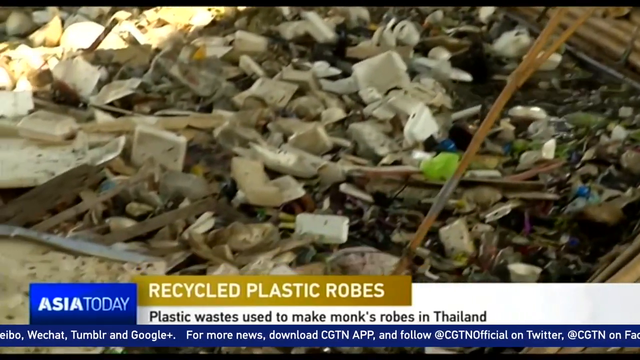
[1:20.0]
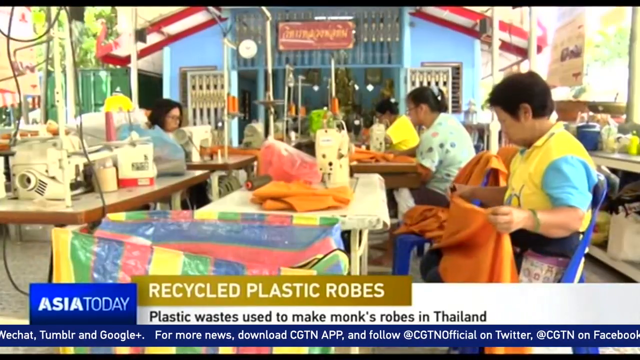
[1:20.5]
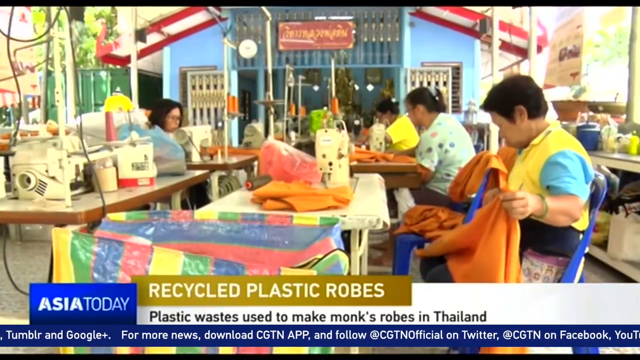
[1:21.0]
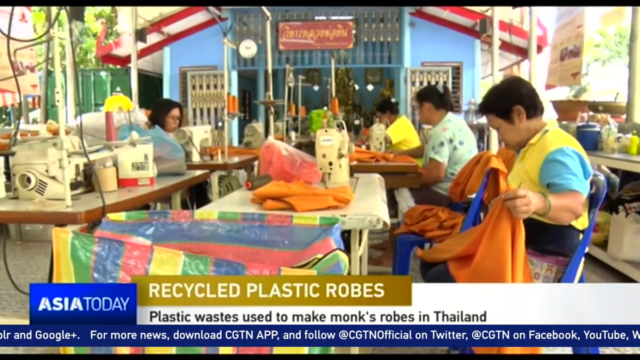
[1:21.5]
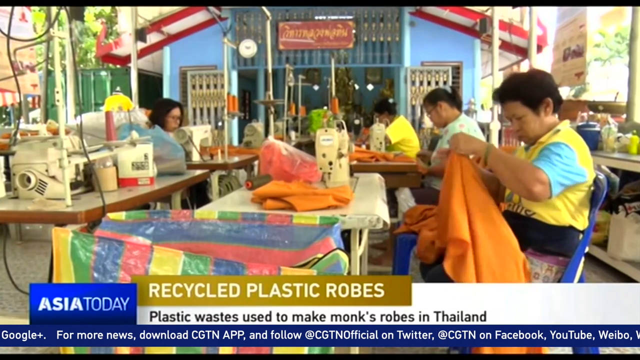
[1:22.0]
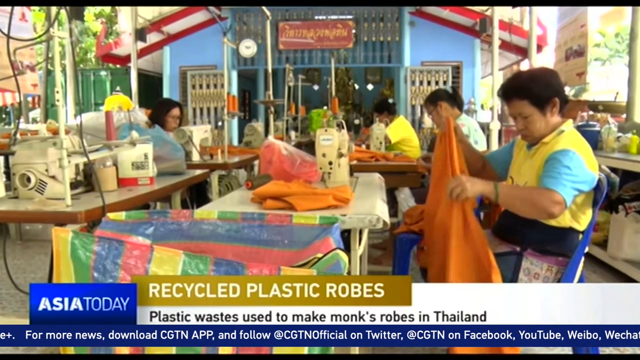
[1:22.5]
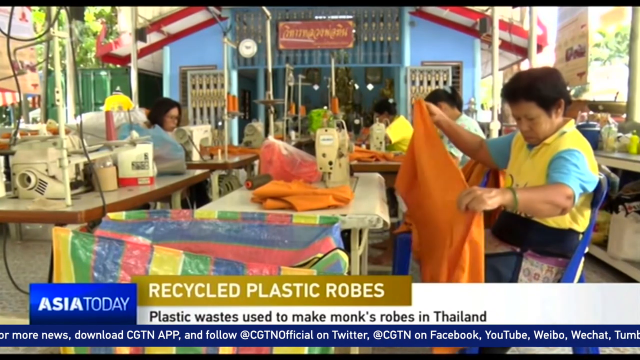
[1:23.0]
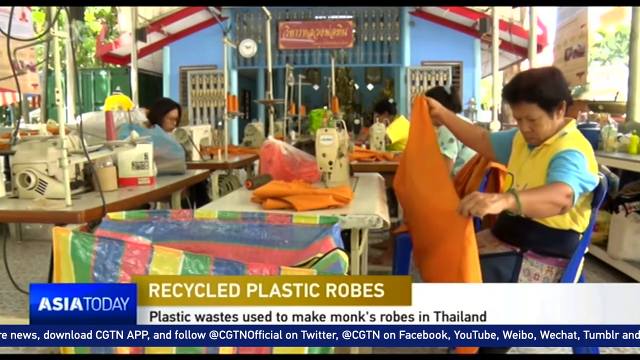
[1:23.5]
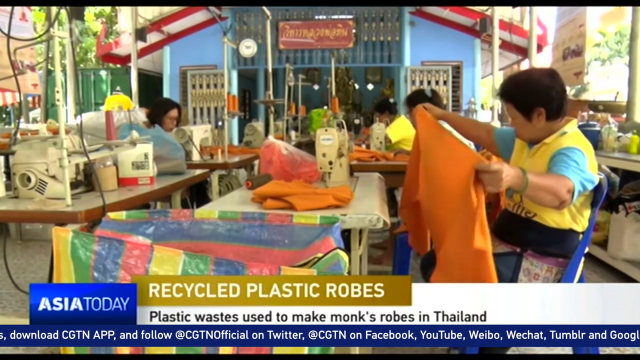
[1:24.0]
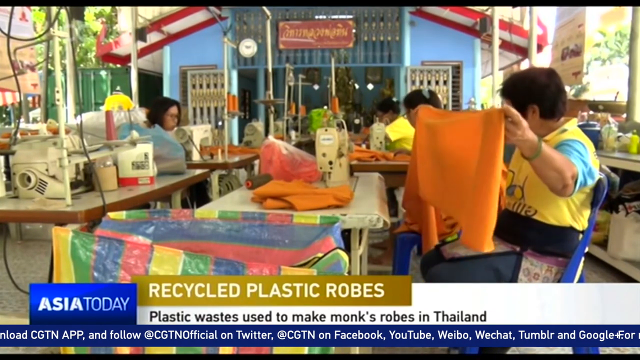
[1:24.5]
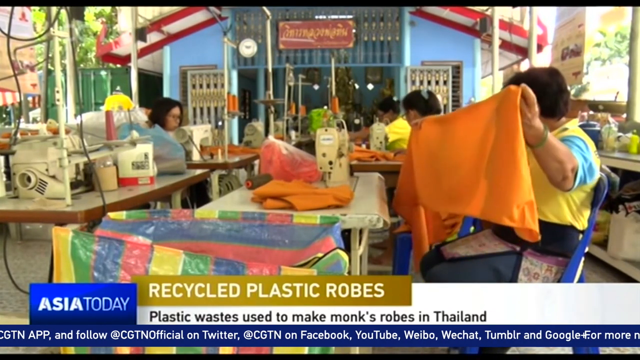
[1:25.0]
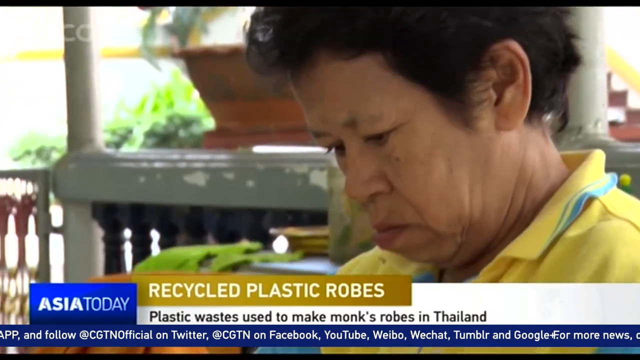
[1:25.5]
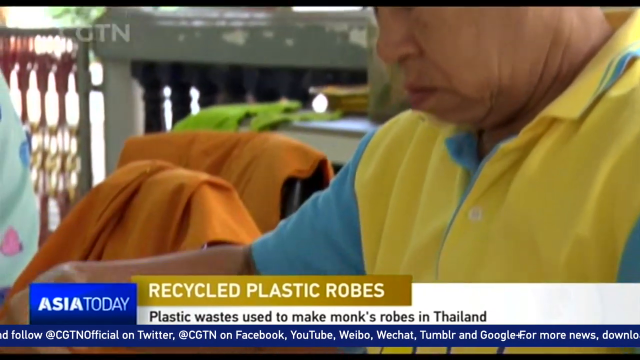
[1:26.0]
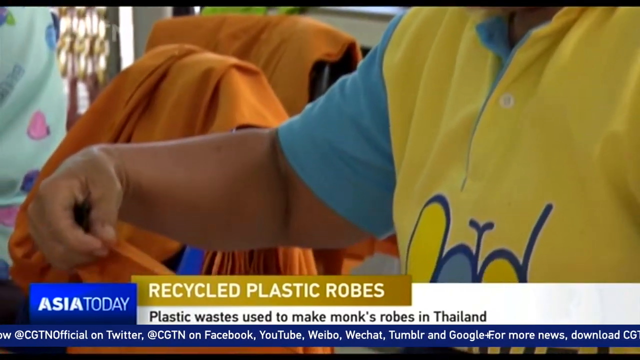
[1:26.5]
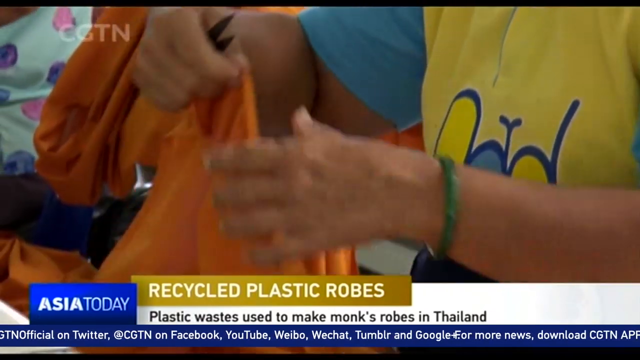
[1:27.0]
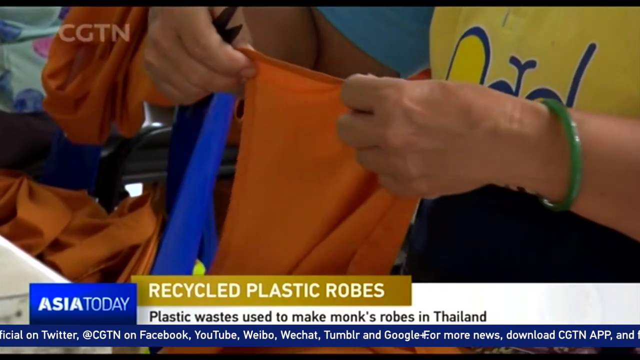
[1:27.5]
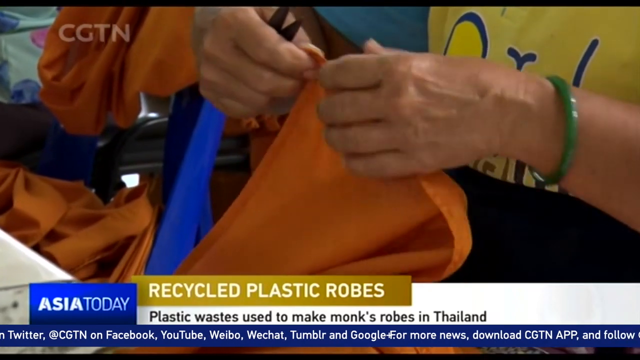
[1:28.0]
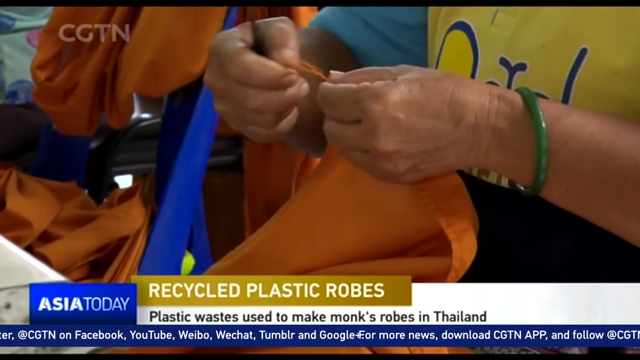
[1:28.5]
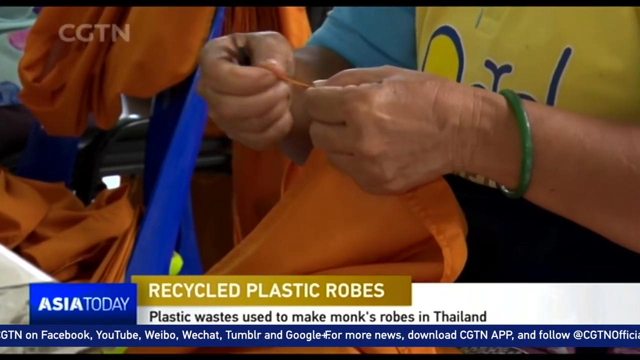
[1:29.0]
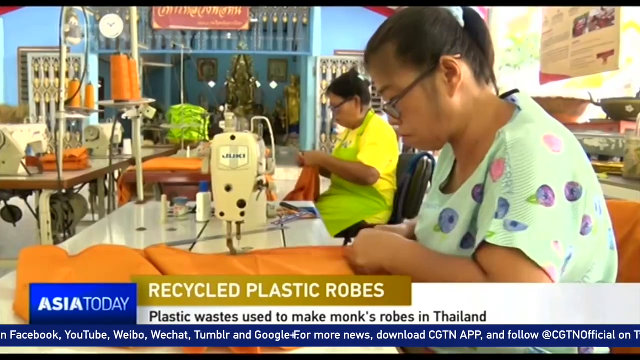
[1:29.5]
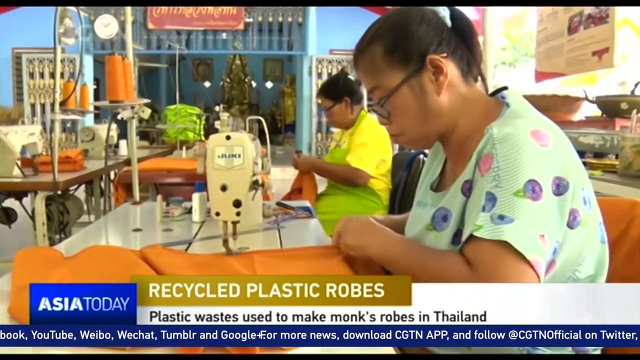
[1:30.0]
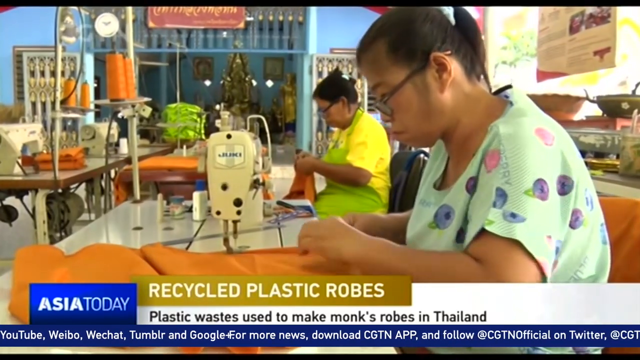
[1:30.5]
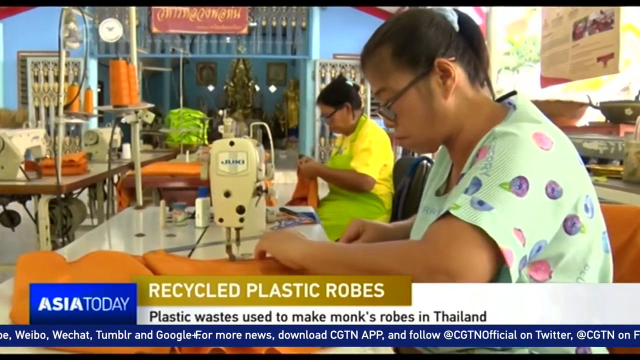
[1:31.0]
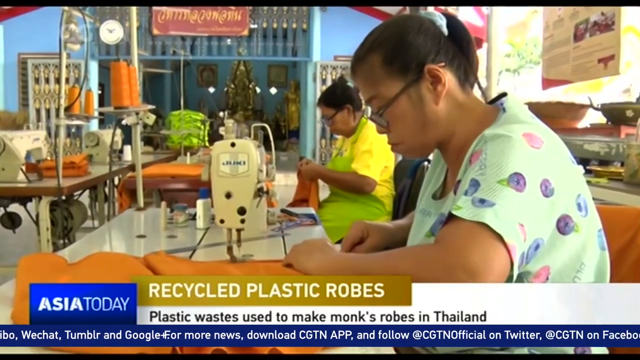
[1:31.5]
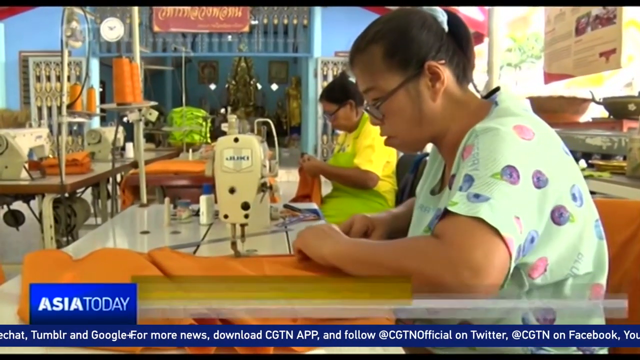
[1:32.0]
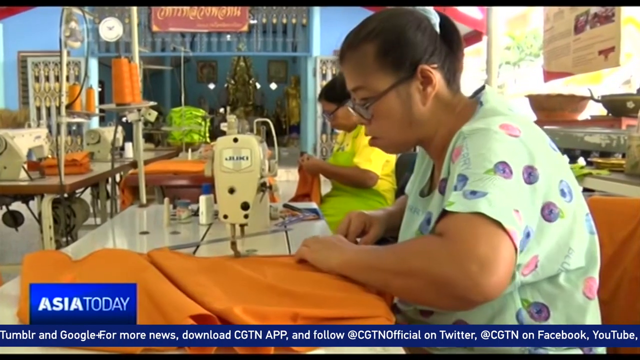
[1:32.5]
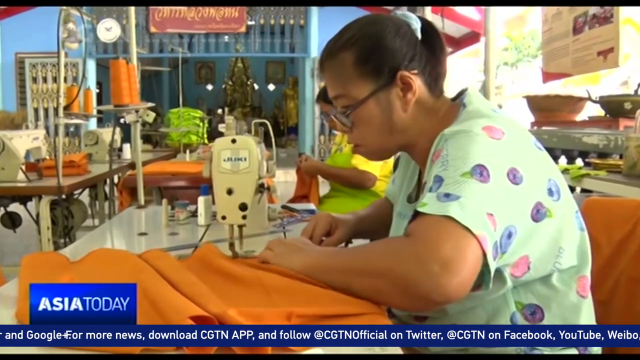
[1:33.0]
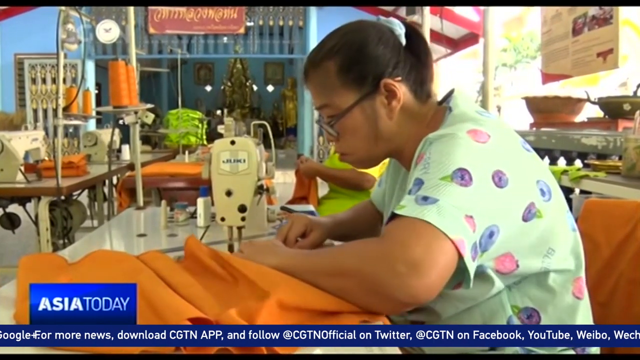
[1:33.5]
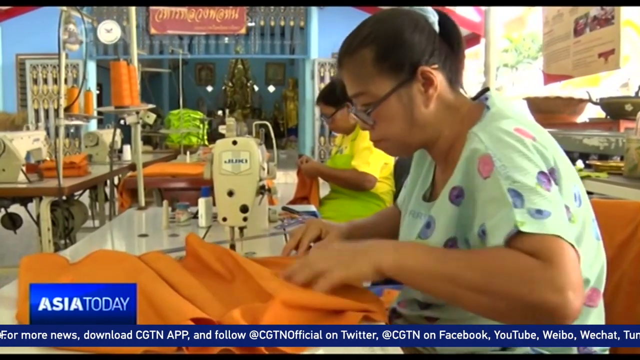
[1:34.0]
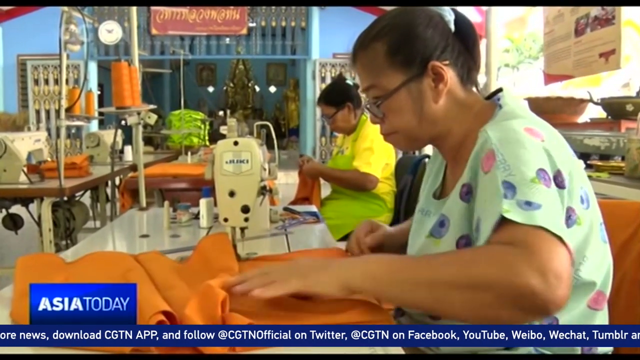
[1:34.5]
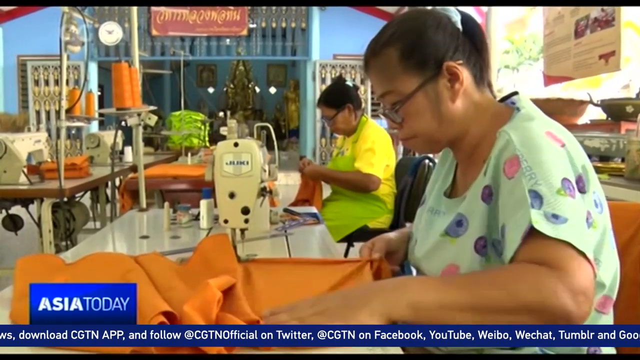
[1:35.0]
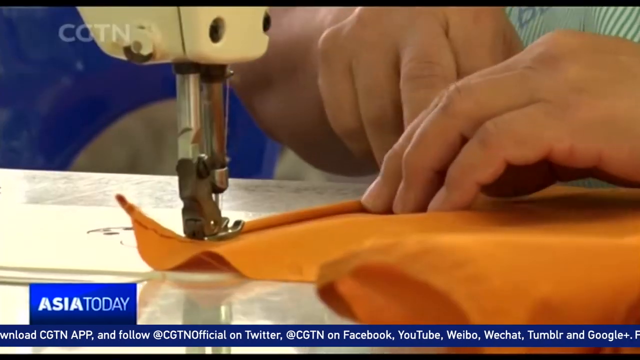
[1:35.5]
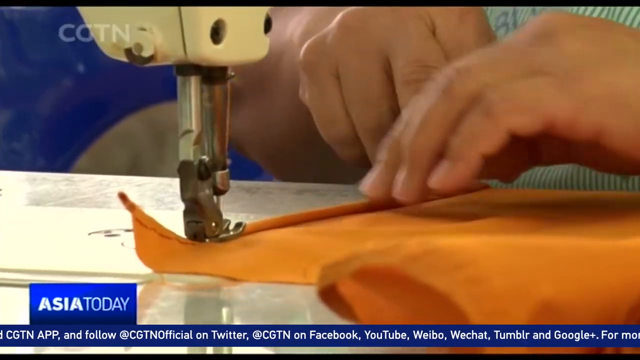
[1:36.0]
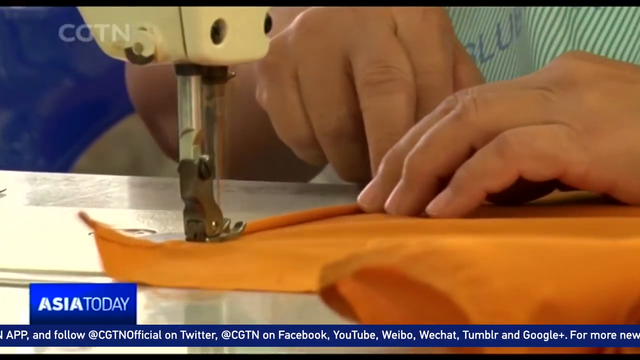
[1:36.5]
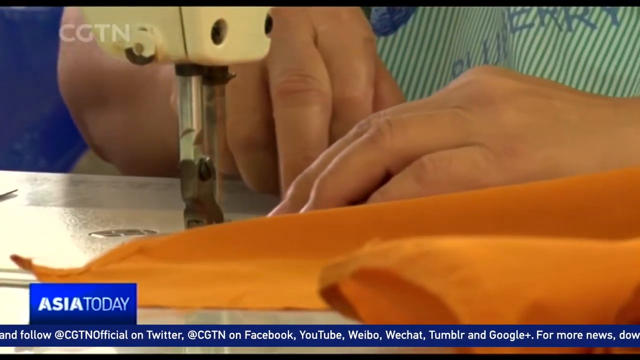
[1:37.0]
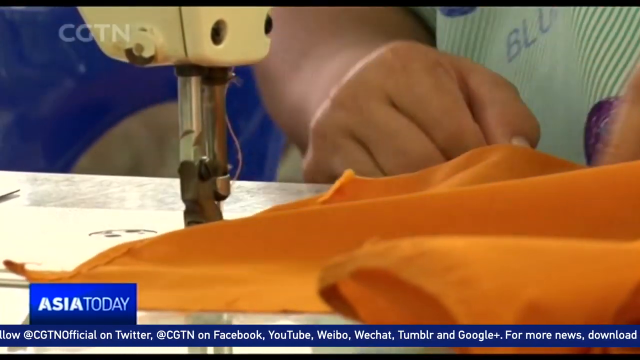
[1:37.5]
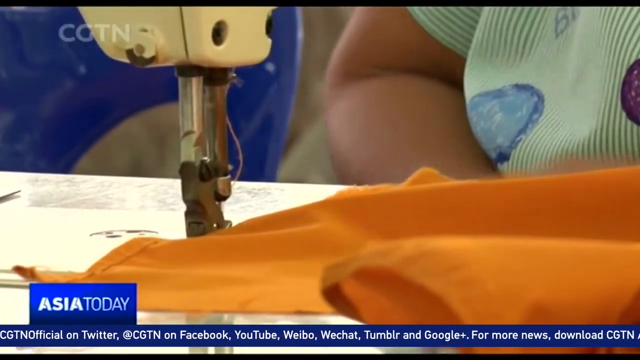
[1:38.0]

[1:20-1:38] Several tables hold sewing machines, with women sitting at them. In the front, text reads "recycled plastic rugs" and "plastic waste used to make monks robe in Thailand". Behind where the women are seated there is a blue painting, and the roof is red and white. On the left side is a green container, and beyond it a big tree. Behind the women on the right side is a table with things lying on it. In the front, just behind the headline, there is a very big colorful brick. The women are sewing with orange material. At the top right, a building stands at a distance from where the women are seated, and several poles can be seen in the space. On top of the blue house is a red board with yellow writing.